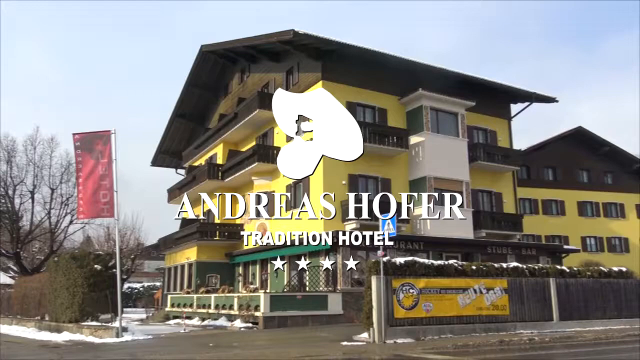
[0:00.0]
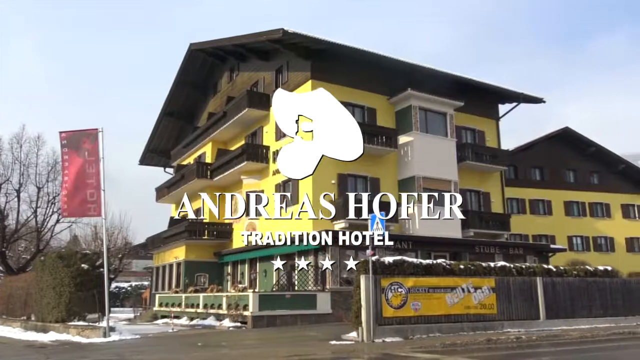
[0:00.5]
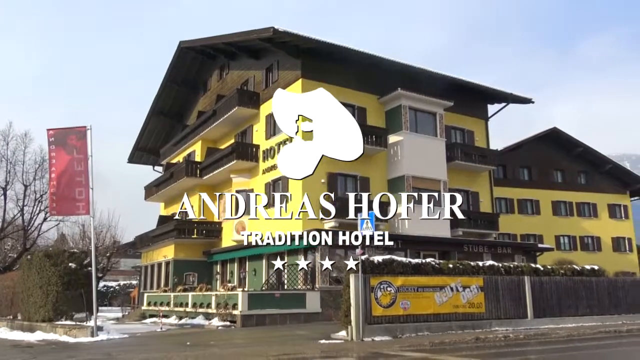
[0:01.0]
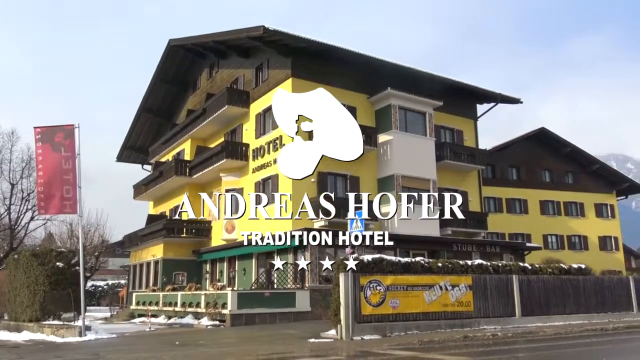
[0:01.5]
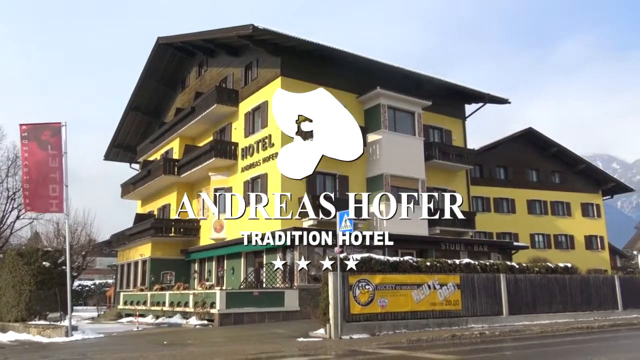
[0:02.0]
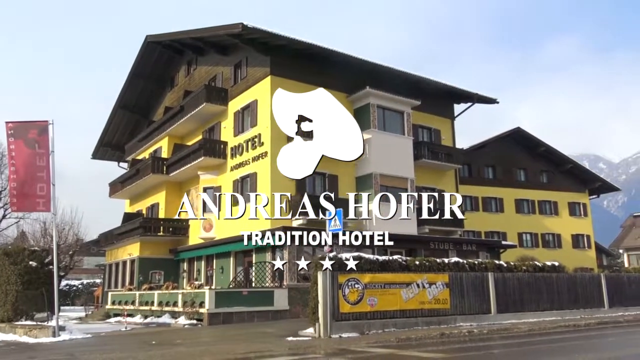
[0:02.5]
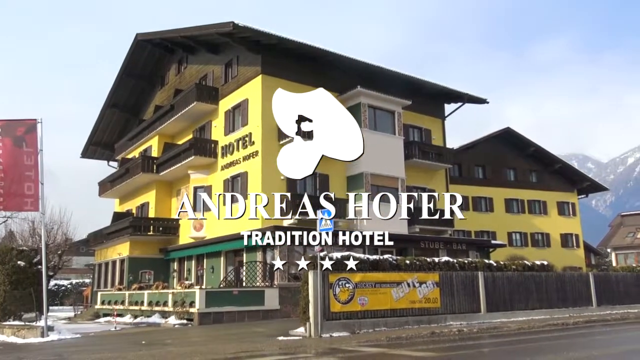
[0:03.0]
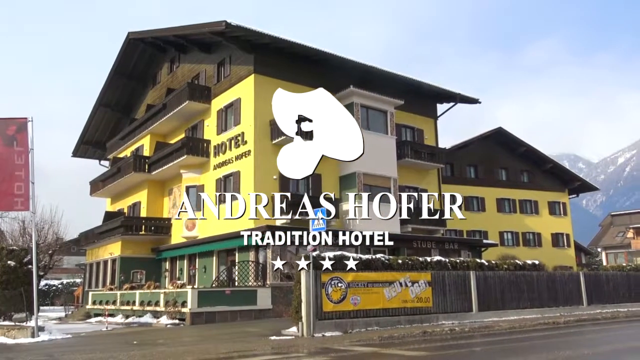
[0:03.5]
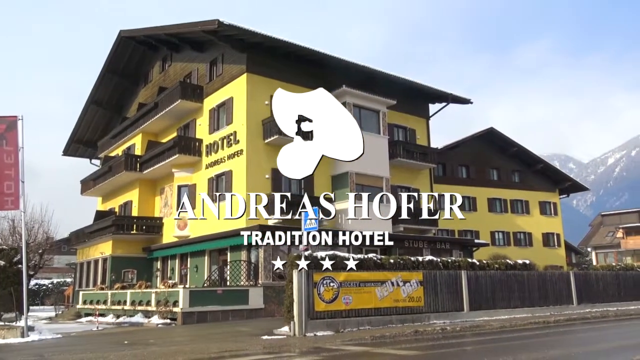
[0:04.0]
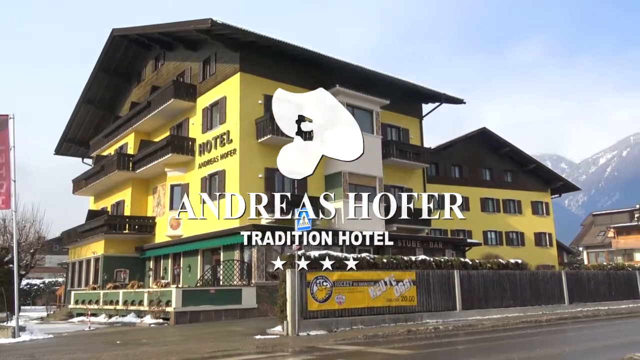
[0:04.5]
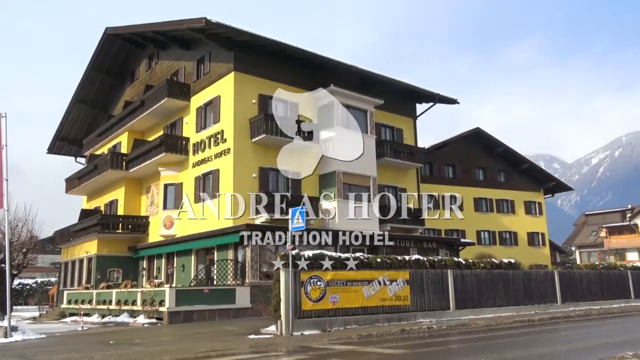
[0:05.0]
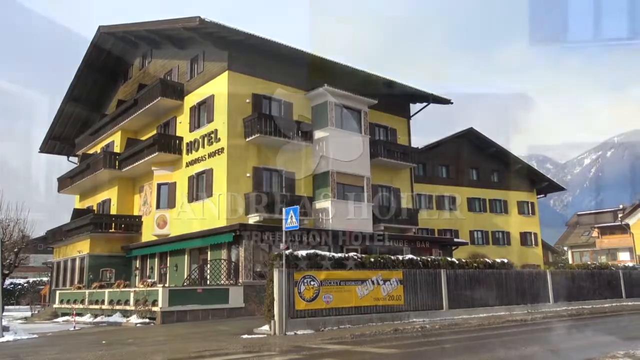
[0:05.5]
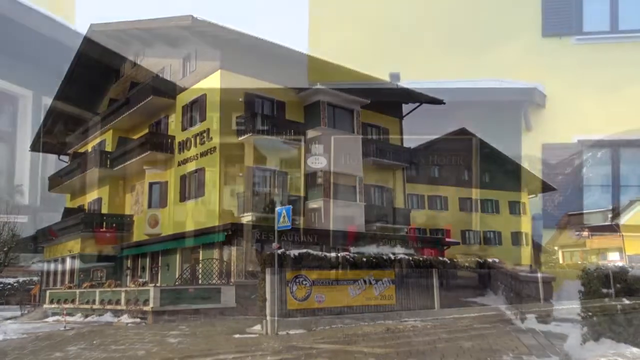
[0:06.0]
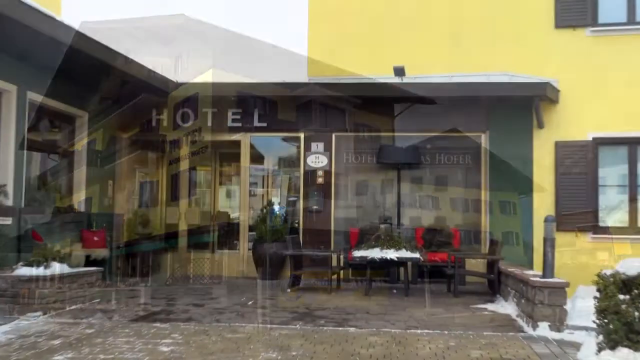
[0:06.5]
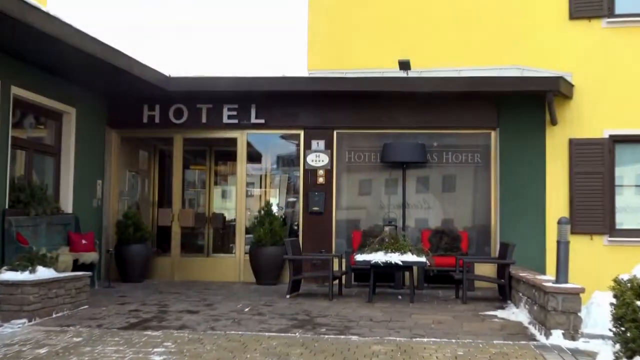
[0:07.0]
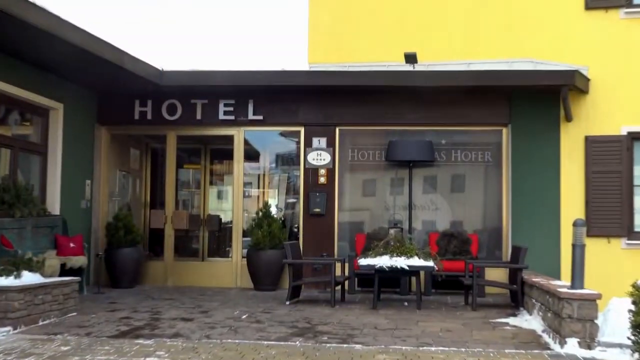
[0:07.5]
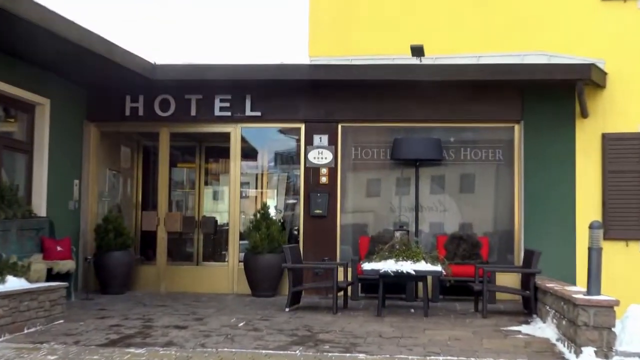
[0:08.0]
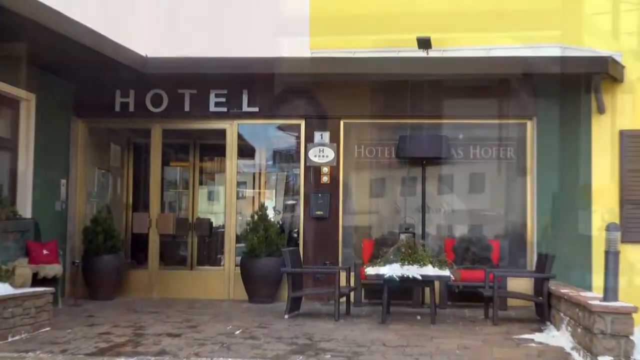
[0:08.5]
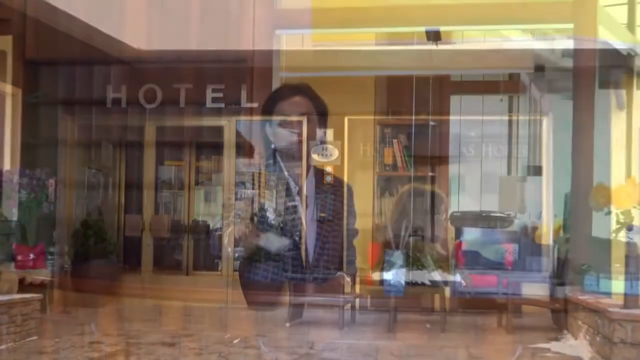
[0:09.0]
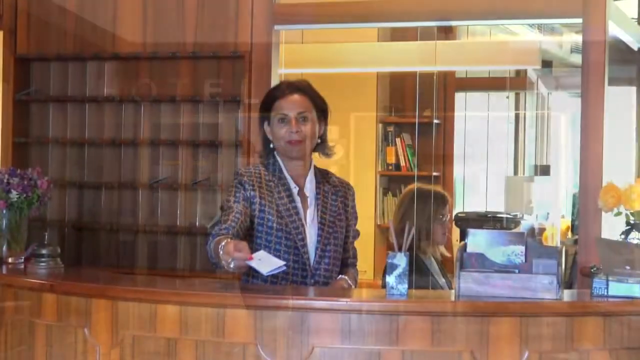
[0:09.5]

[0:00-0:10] A video advertisement for a hotel called Andreas Hofer opens on the outside of the hotel, which appears to be three or four stories tall and is painted yellow. Four stars are listed below the title. The video then transitions to the front entrance, where a person wearing a professional jacket is behind a wooden counter, holding out a room key card holder. Another person is visible seated behind her at a computer, and a doorbell is visible on top of the counter. The interior walls appear to be made of wood, and the walls in the back office appear to be painted yellow.